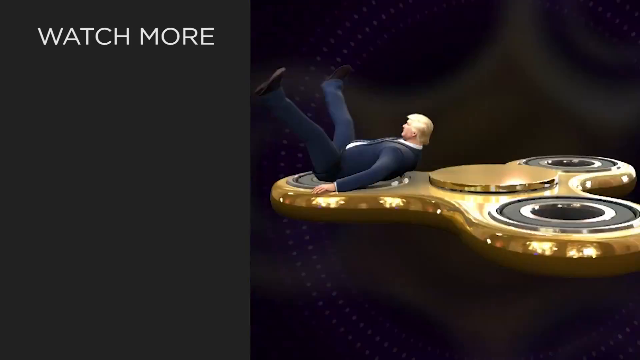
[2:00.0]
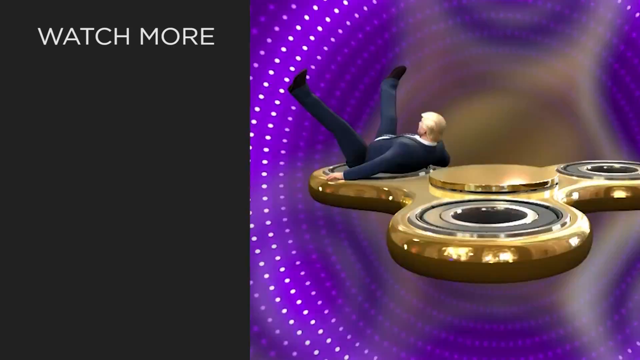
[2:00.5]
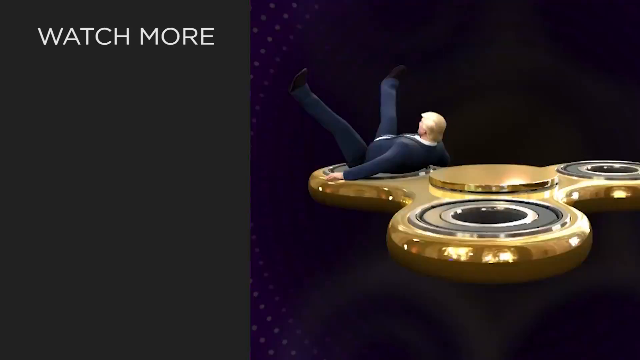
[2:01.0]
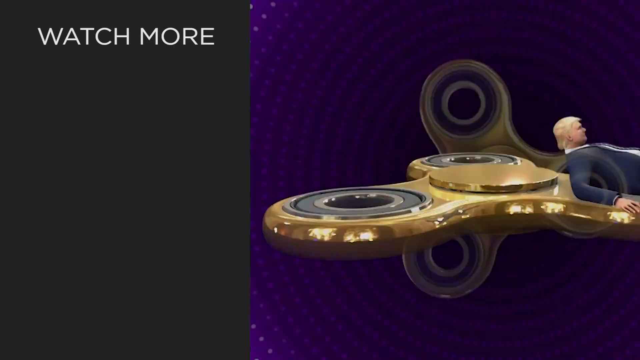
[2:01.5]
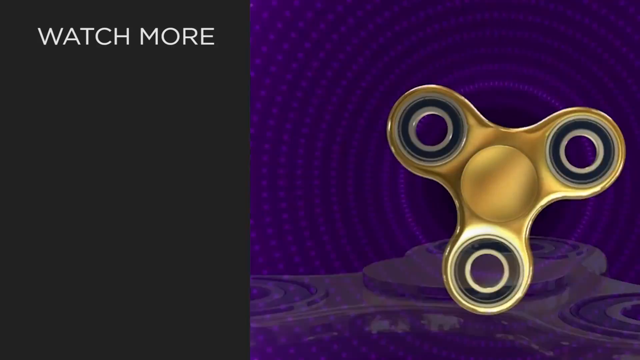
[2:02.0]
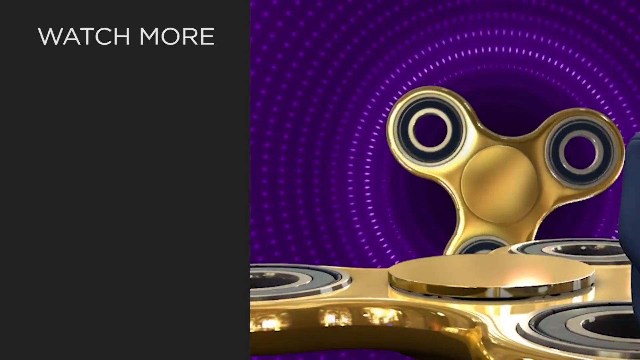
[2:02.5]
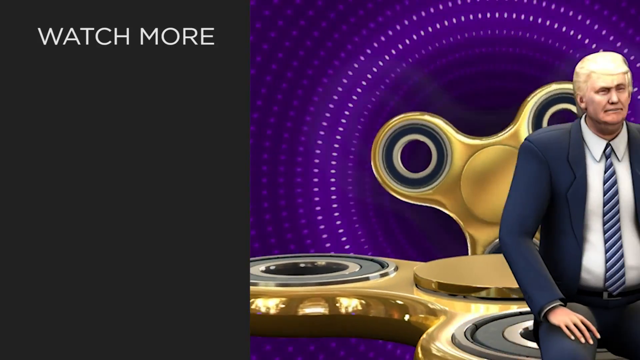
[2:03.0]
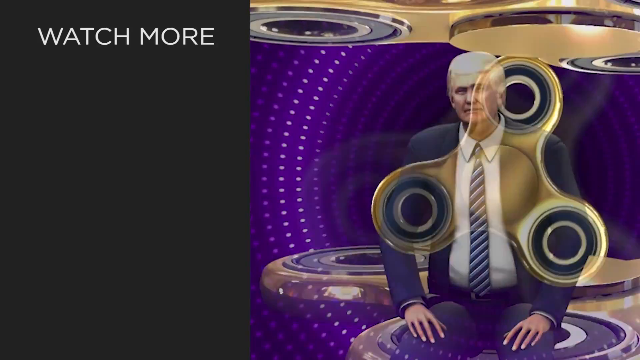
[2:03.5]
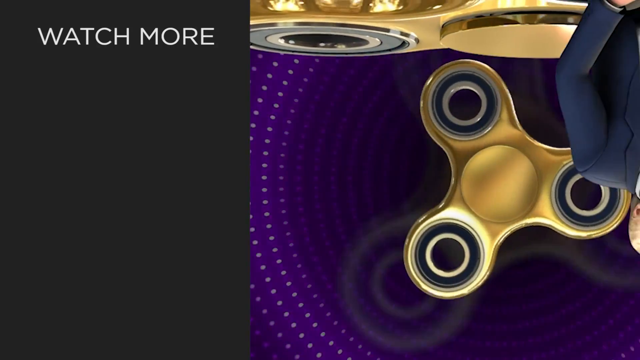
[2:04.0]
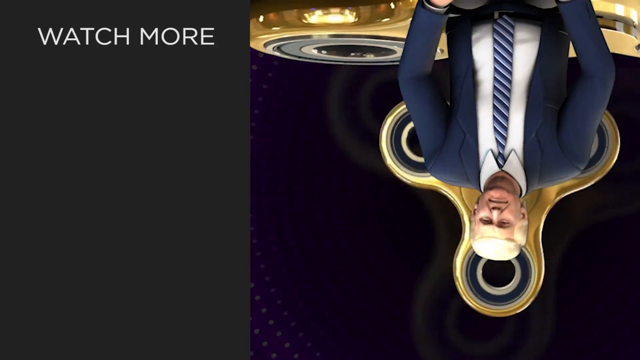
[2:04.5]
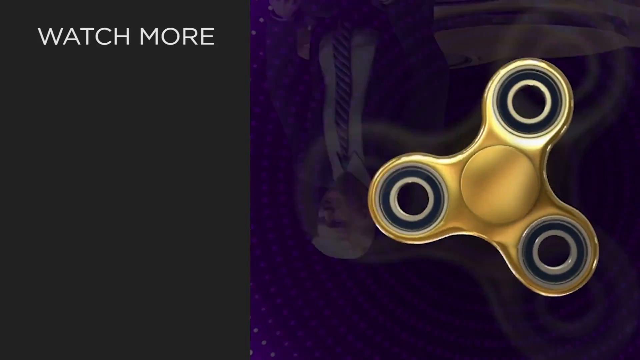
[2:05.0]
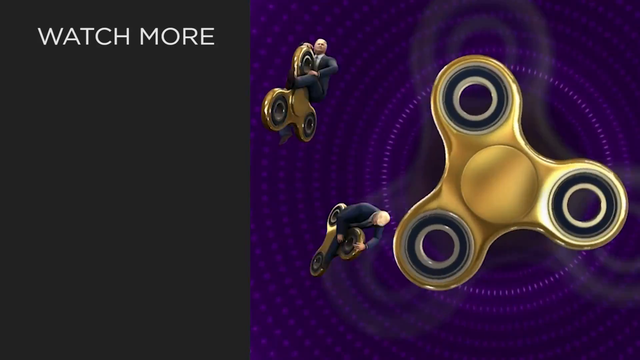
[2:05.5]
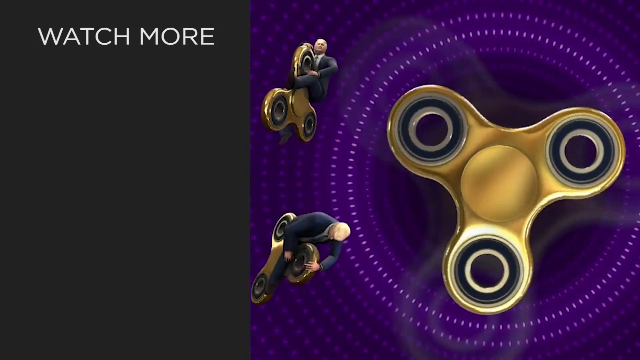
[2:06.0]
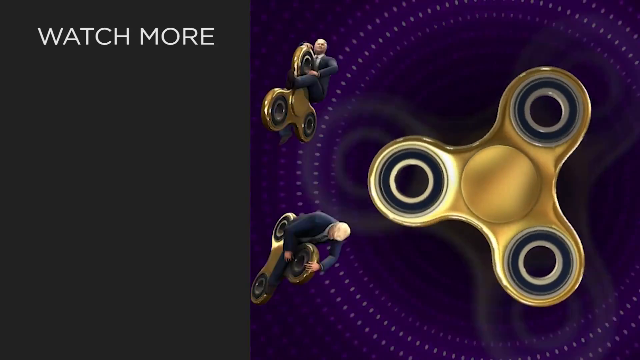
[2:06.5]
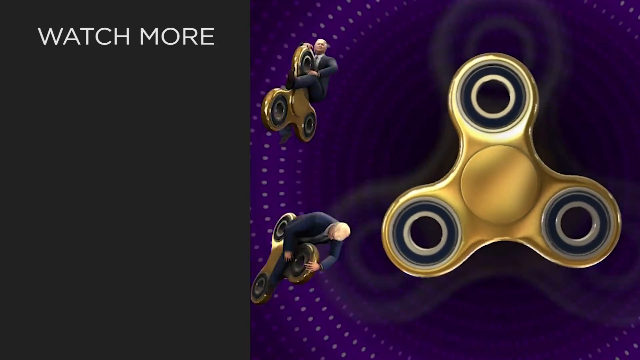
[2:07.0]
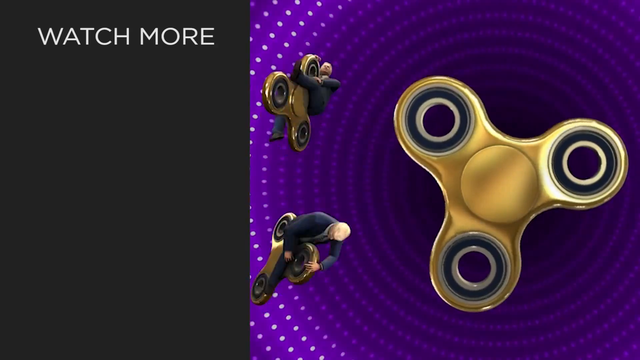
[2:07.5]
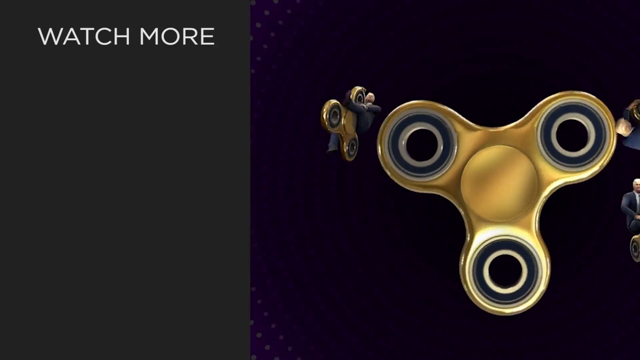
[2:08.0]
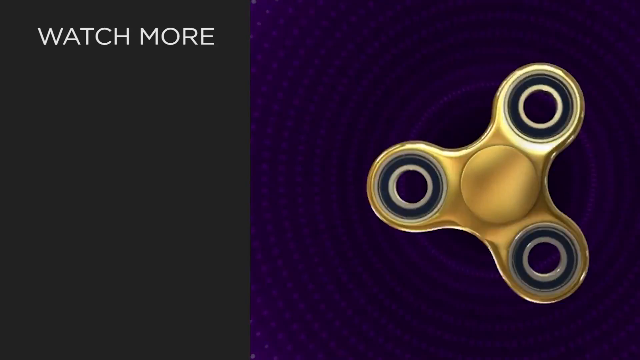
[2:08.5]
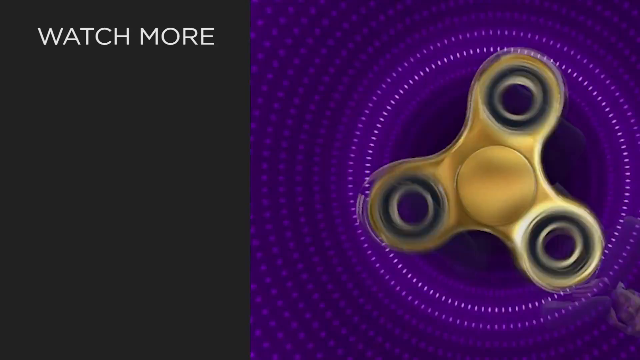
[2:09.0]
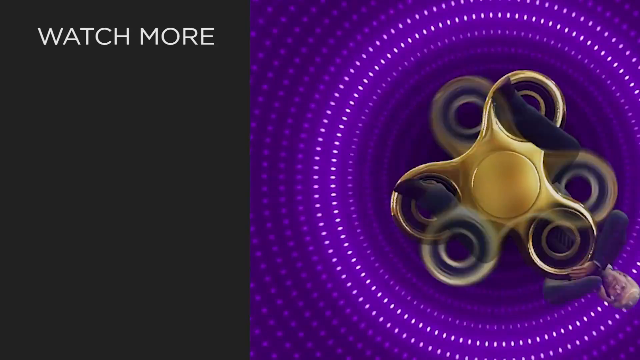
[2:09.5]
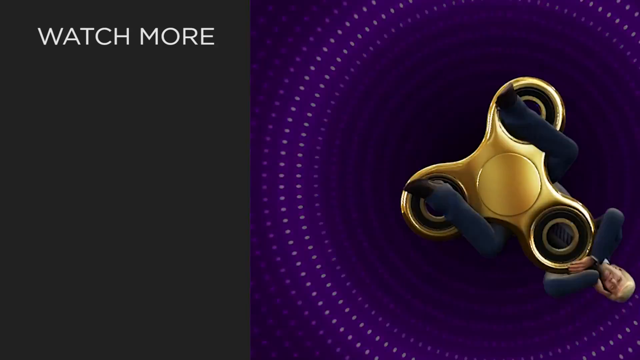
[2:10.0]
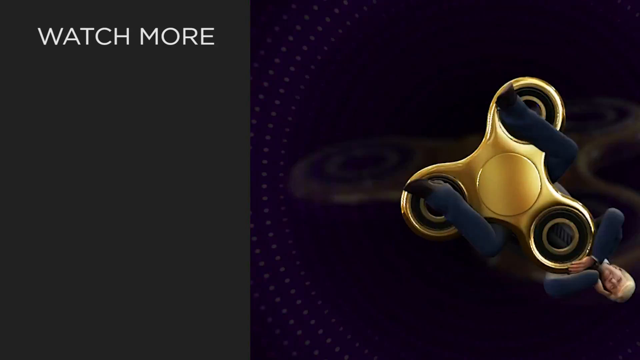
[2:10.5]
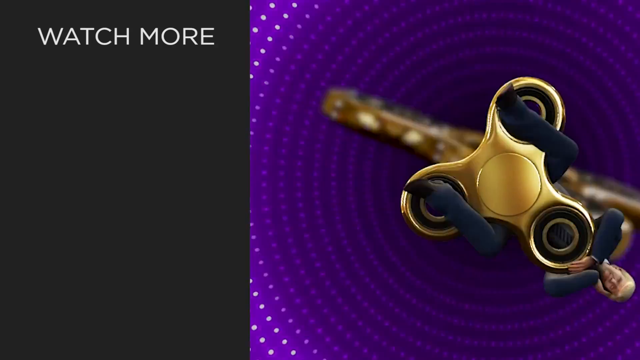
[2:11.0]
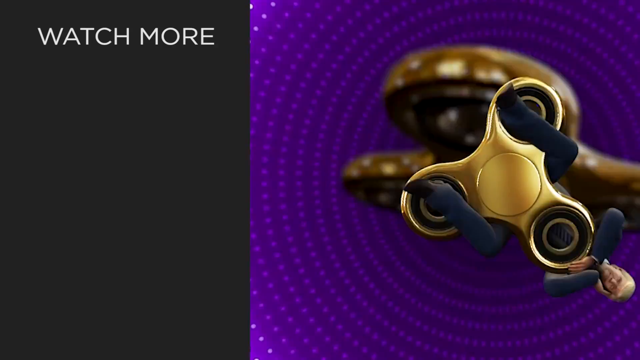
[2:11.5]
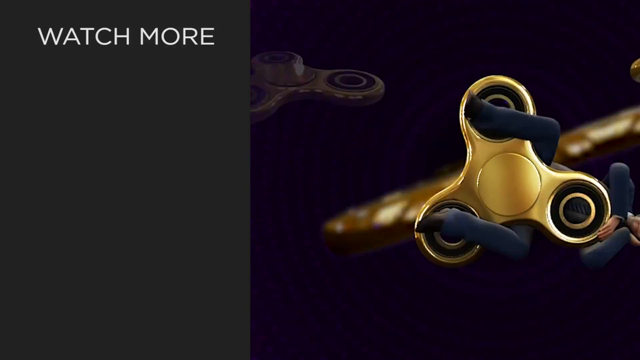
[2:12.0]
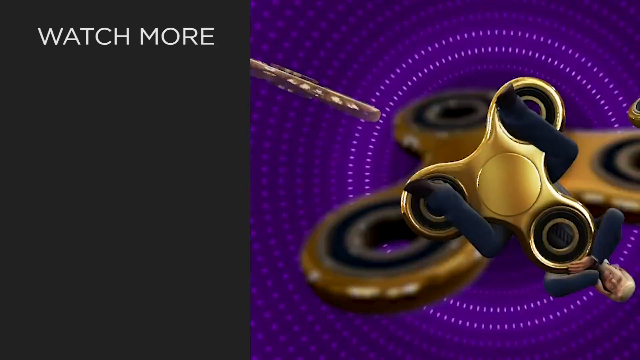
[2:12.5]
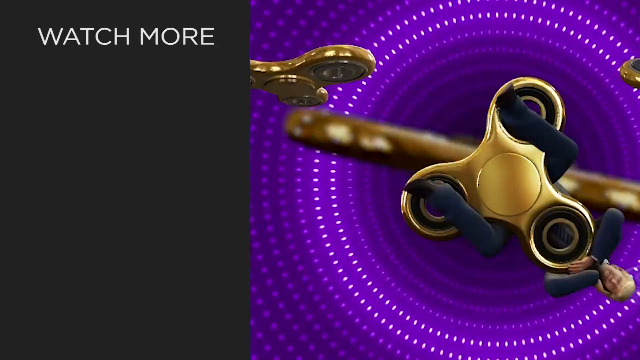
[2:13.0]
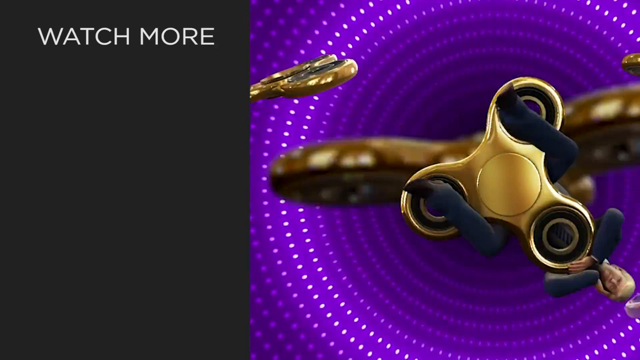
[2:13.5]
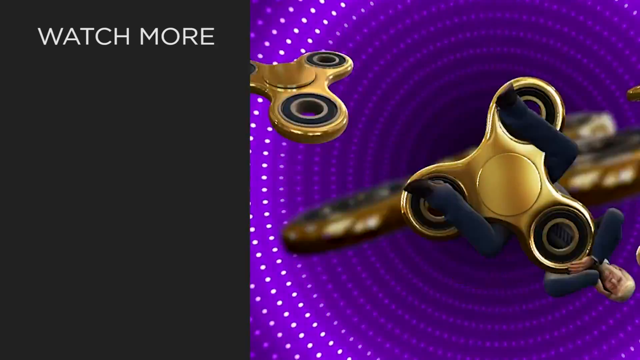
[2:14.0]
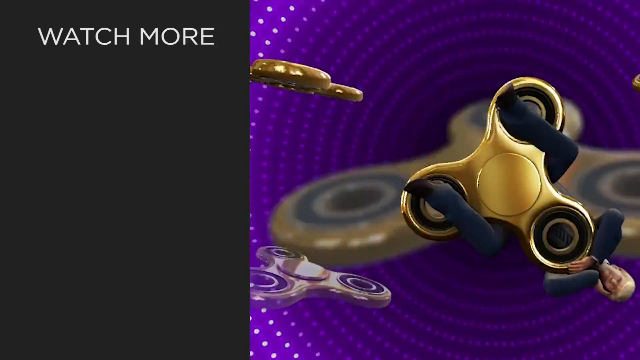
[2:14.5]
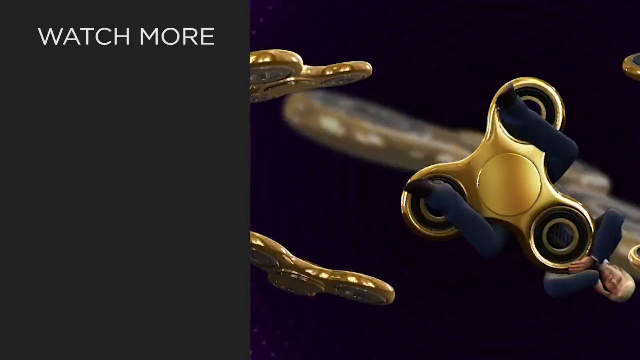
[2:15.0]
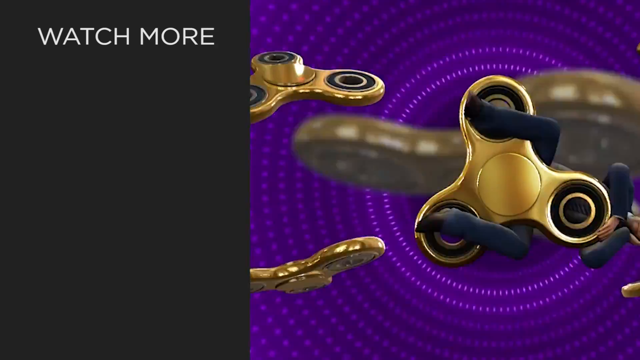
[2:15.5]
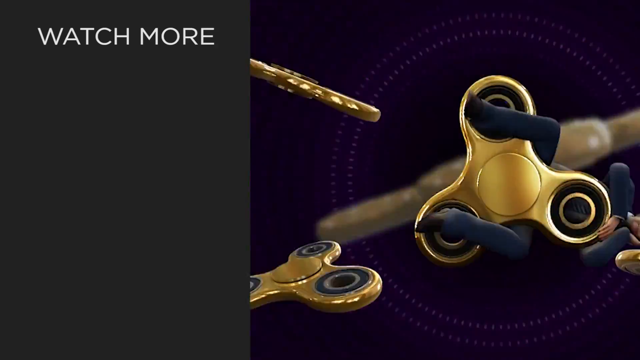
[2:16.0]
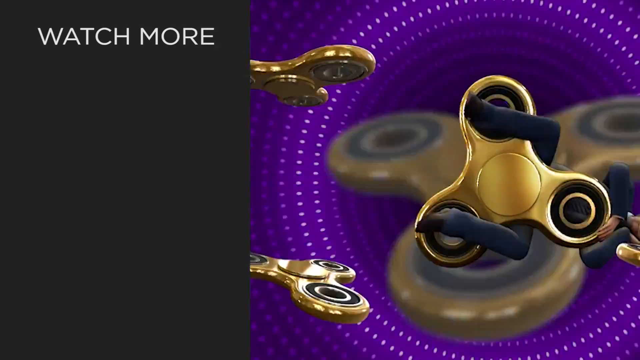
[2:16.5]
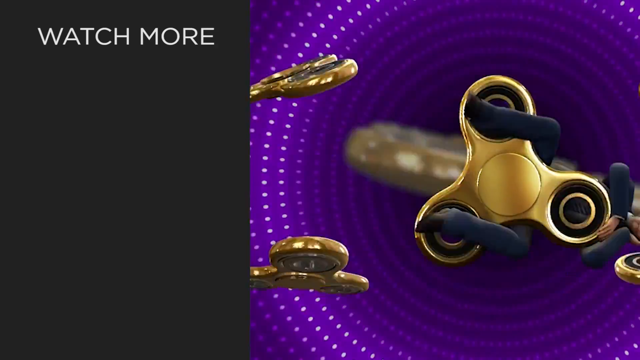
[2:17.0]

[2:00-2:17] On the left-hand side, in a sort of light grayish color, are the words "Watch More", and white text appears at the top left. On the right-hand side is a large animated gold fidget spinner with a man in a blue suit riding it, his legs up in the air. As the fidget spinner spins him very rapidly, the scene shows the animated man being spun around over and over. The background on the right side is very purple. The man appears to have a white skin tone and blonde hair and to be elderly, maybe in his 50s or 60s, and he wears black shoes. As the spinning continues, more fidget spinners appear, three in total, with two men who look exactly the same spinning together. Then the shot switches to the man looking directly at the viewer, his left hand on his left cheek, as the fidget spinner spins him.